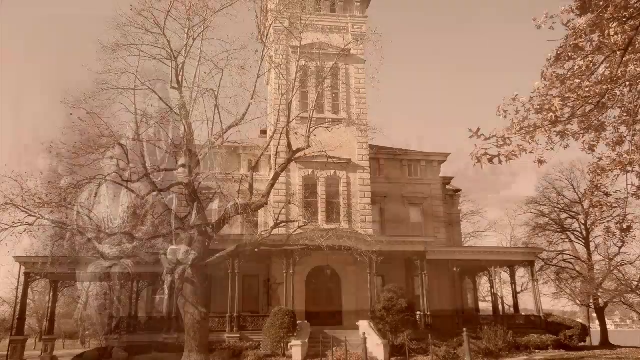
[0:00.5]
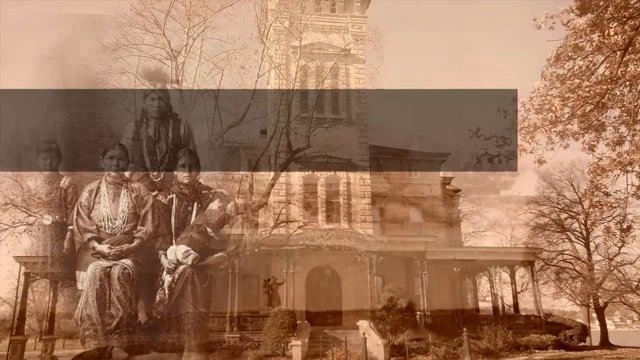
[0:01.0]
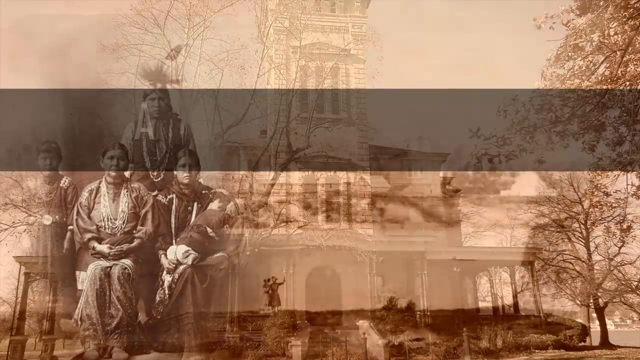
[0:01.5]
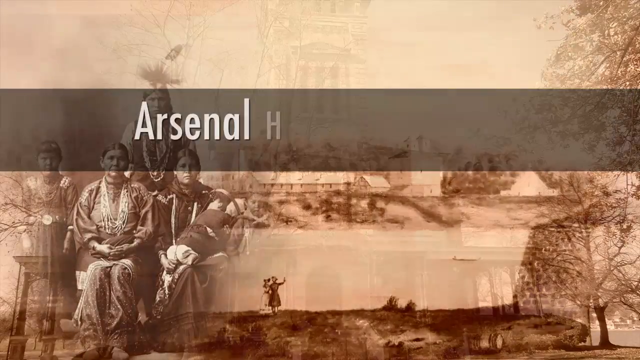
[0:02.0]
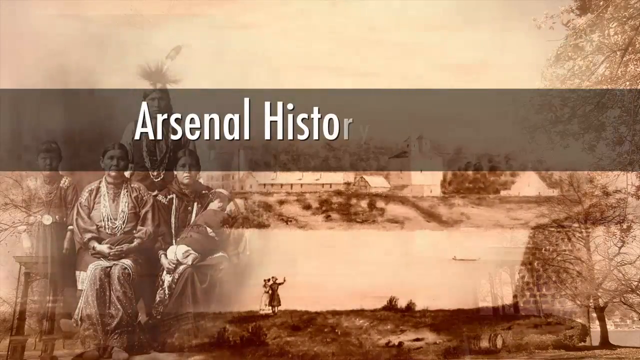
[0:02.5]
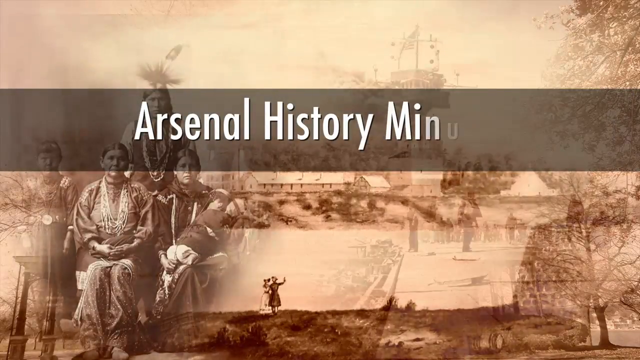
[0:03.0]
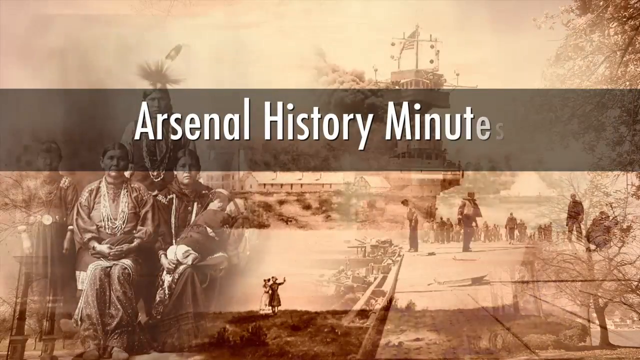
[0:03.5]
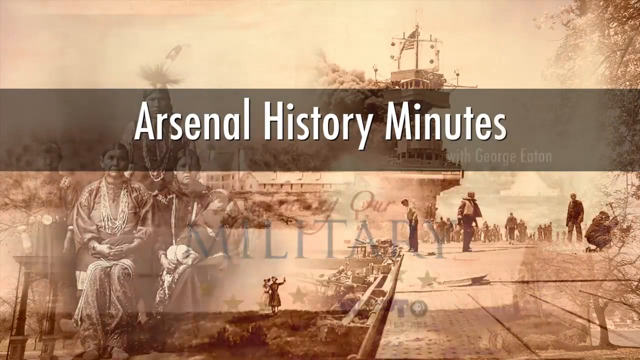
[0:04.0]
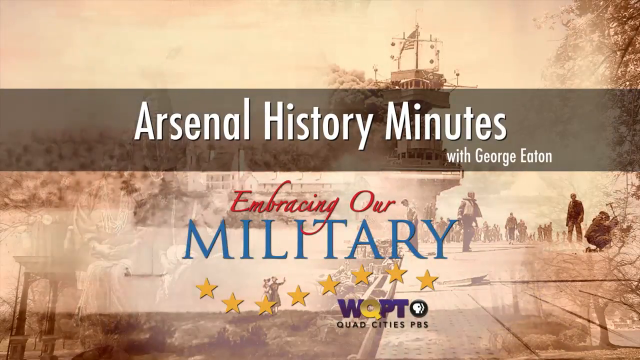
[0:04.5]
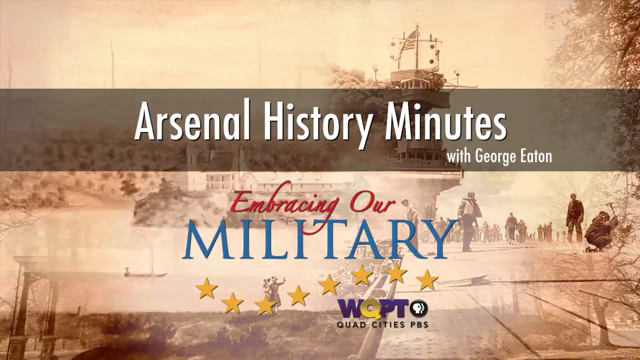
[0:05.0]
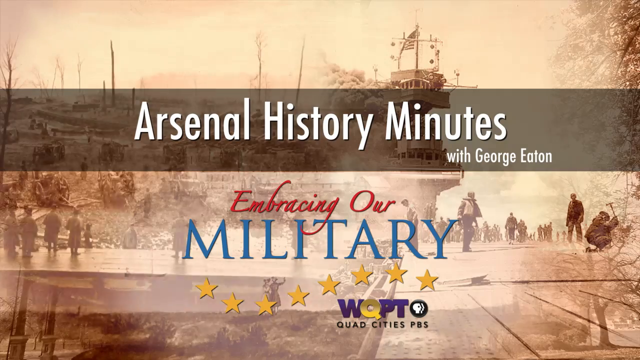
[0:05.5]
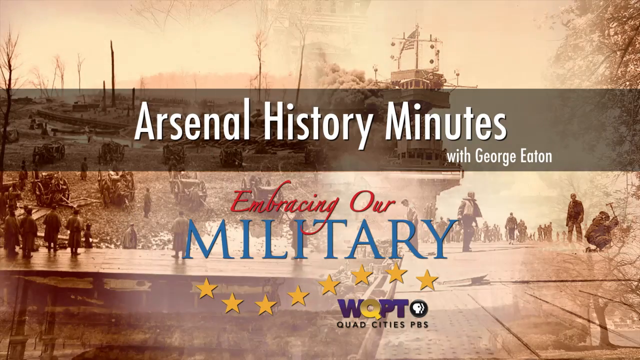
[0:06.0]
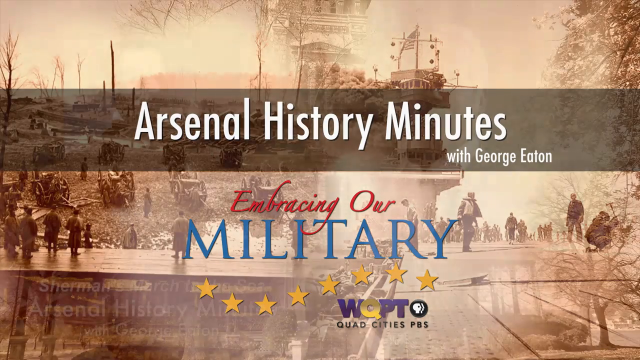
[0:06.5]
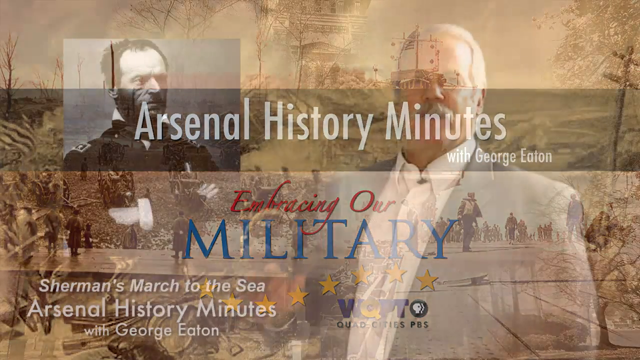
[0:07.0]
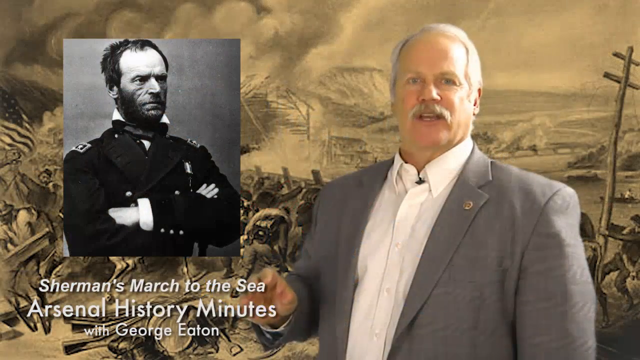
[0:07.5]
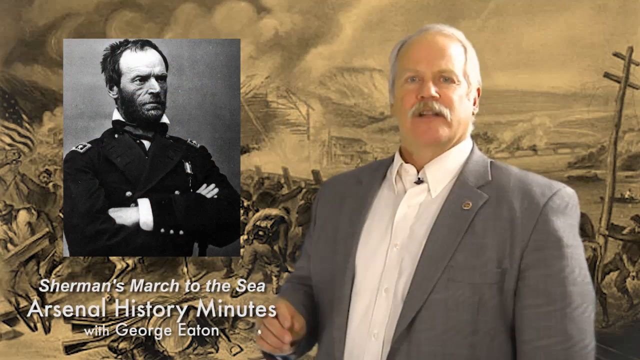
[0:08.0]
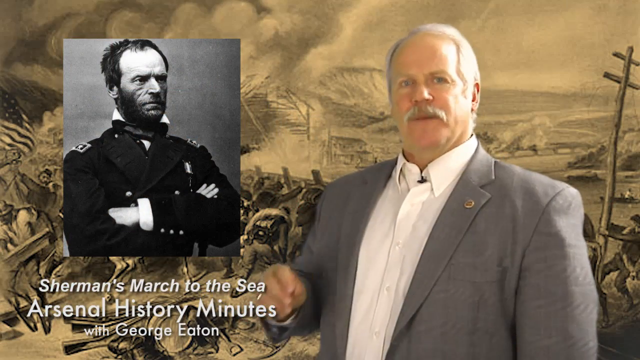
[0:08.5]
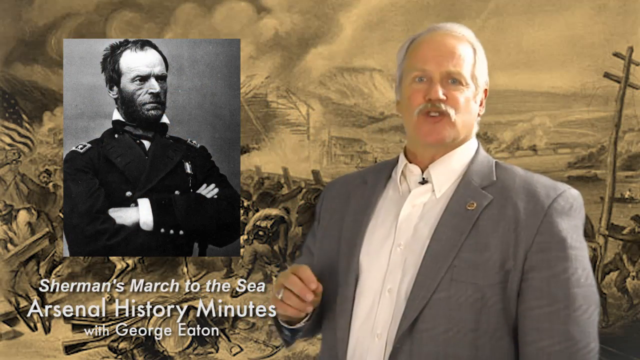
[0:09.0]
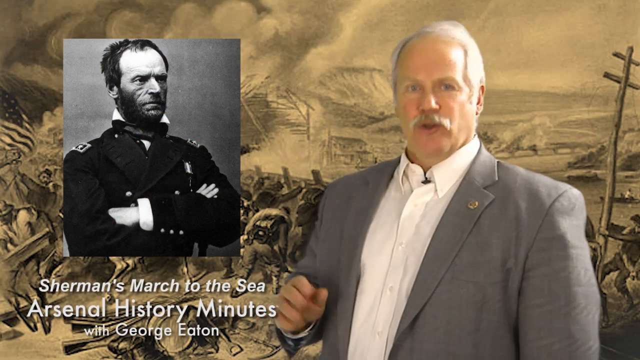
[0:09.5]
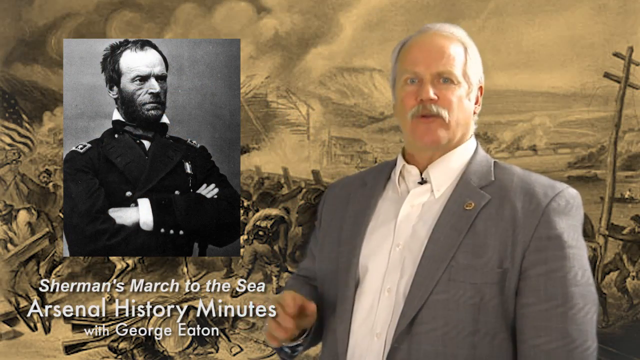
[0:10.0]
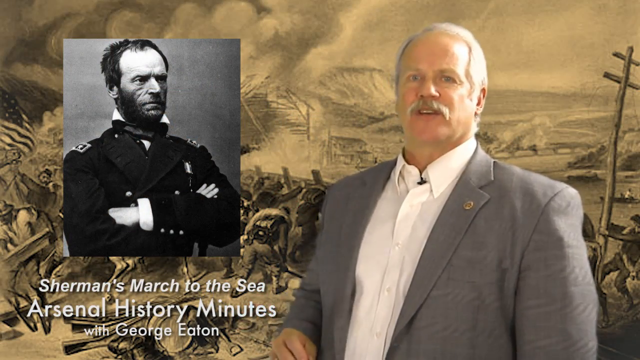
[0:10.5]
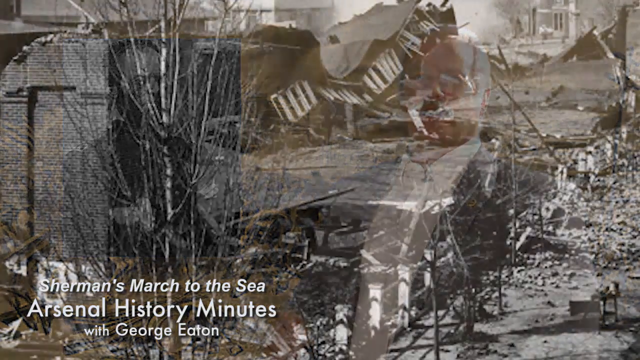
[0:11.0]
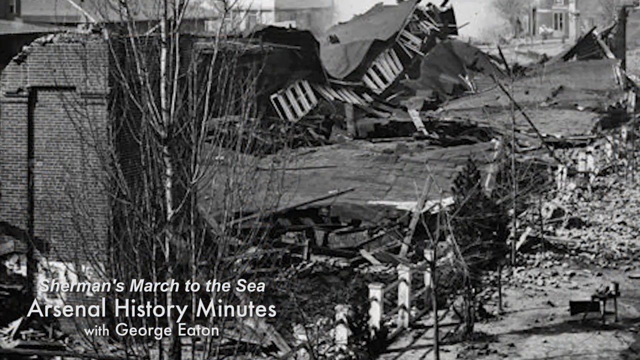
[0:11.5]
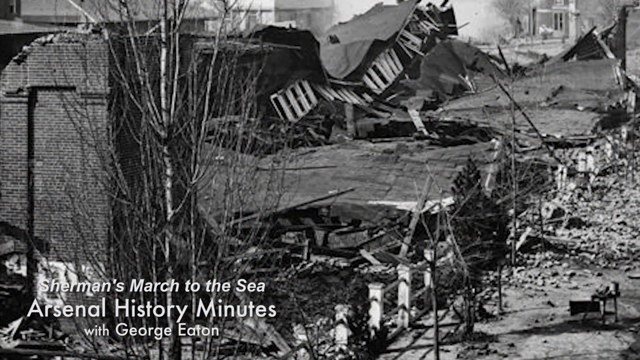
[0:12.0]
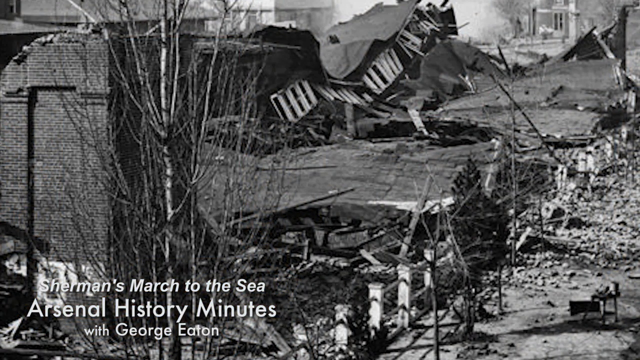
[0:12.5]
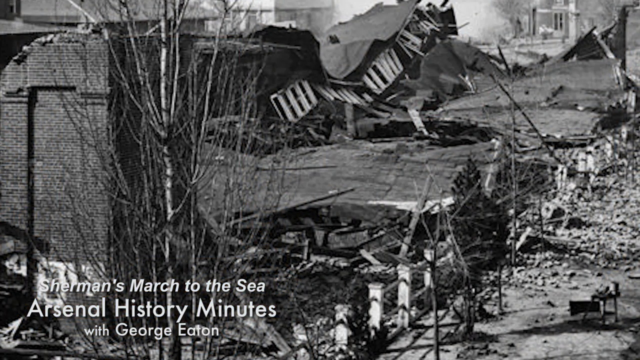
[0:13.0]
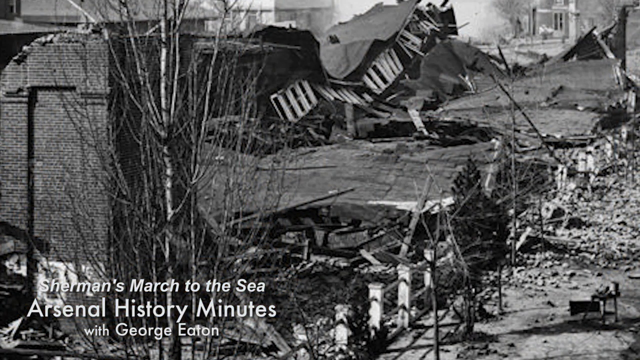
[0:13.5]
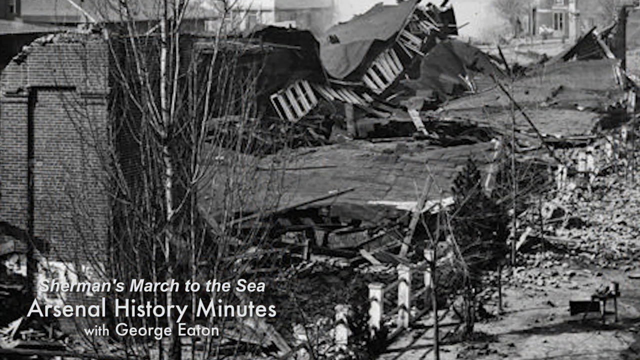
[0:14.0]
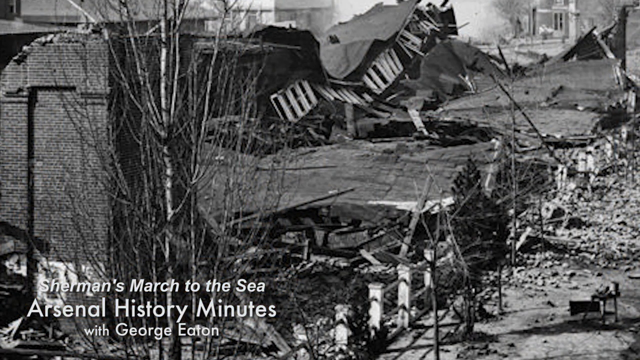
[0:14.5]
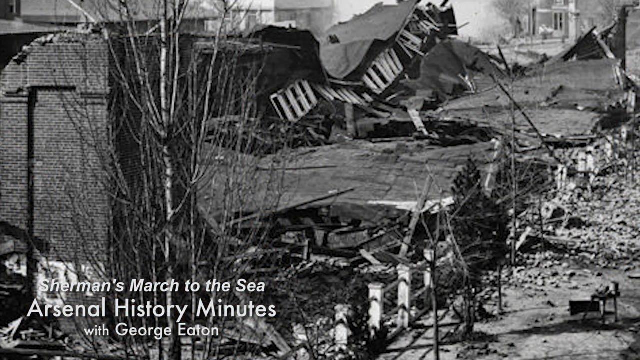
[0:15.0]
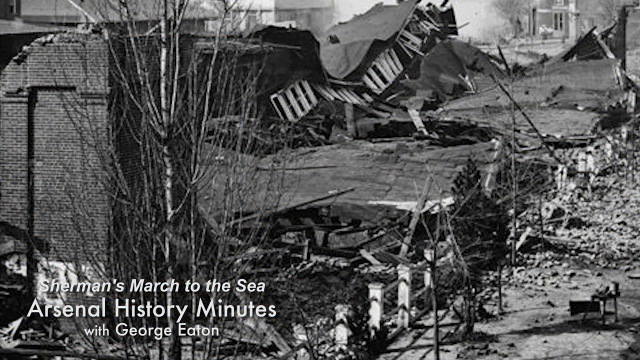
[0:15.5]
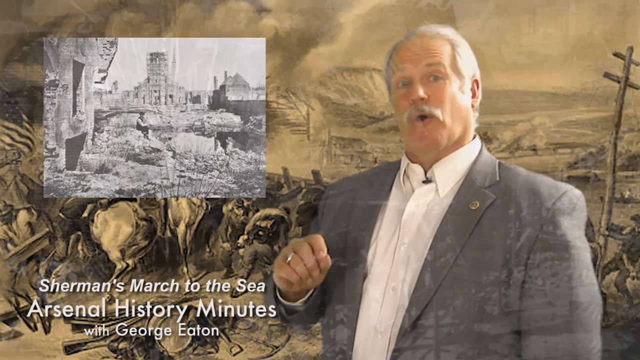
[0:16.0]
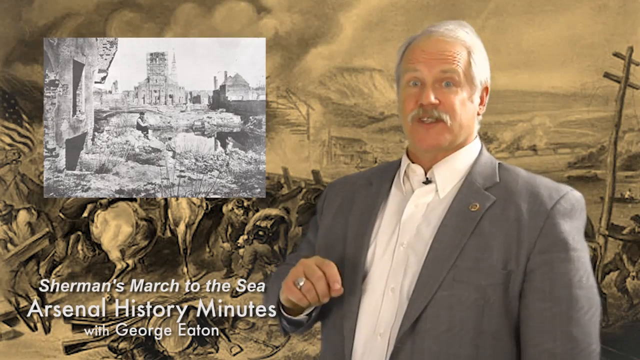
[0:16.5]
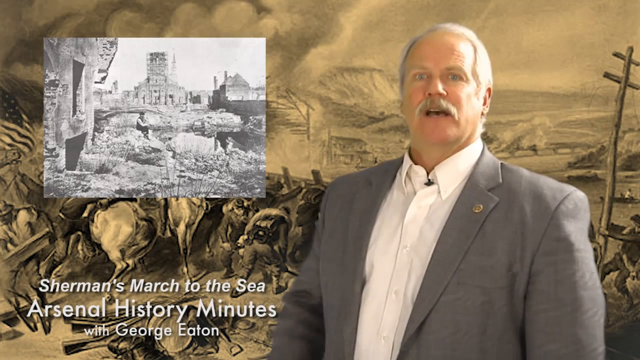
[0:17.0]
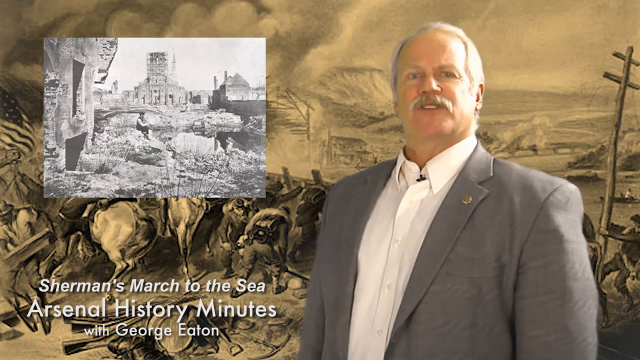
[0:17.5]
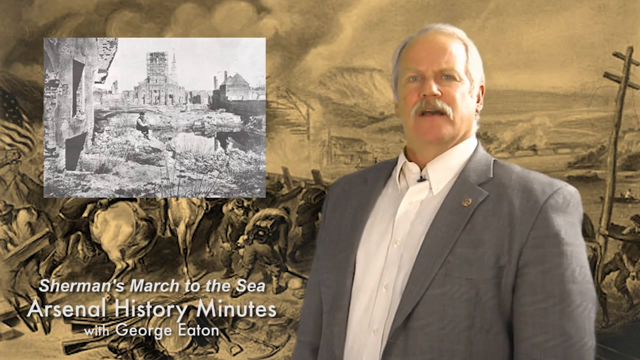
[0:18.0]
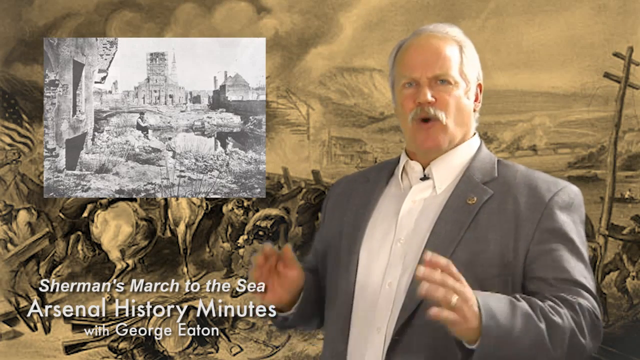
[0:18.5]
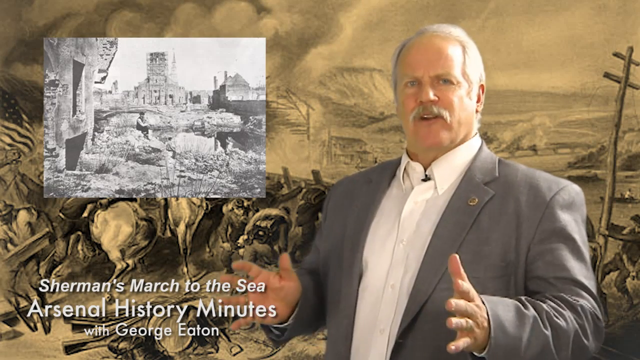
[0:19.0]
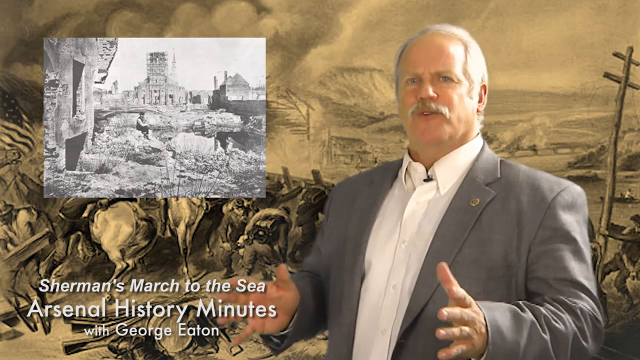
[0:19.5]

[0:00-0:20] At the start, there appears to be a building in the background, and some Indians are shown at the top left; they look like they are all sitting down and facing the viewer. A transparent black banner runs across the middle of the frame, and text moves in from left to right, reading "Arsenal History Minutes" with "With George Eaton" below it. At the bottom, red text reads "Embracing Our Military," and there are some stars at the very bottom. The background appears to change through many yellow and black historical scenes. The scene then changes to what looks like a narrator: a man in a gray suit with a white shirt and no tie, with white hair and a white mustache, on the right side of the frame. He talks toward the viewer with his right hand raised, motioning with his fingers and thumb pressed together. On the left is a black and white picture of a man who looks like some sort of military man. He is a little scruffy, with a beard and mustache, appears to be balding, wears a black coat, and has his arms crossed over his chest while looking toward the right. White text at the bottom reads "Sherman's March to the Sea, Arsenal History Minutes, with George Eaton." The man in the gray suit keeps talking, and the scene changes to a black and white picture of ruins and run-down houses, with a brick wall on the left. It then returns to the man, who talks and motions with his right hand again. On the left there appears to be a picture of a man sitting down with ruins in the background. The man raises both arms in front of him with his palms facing each other.